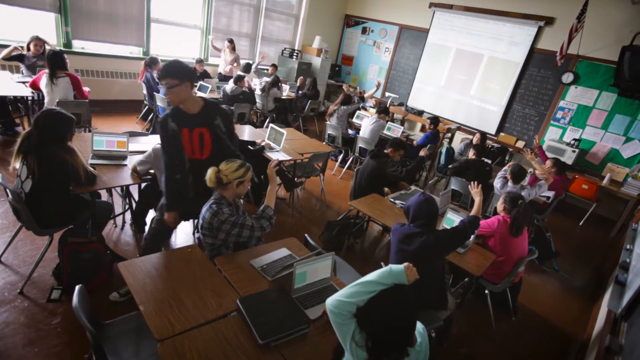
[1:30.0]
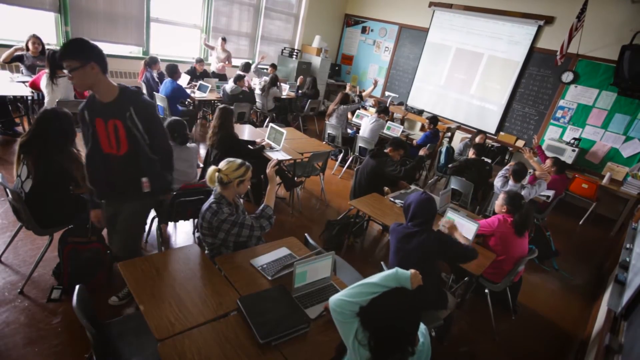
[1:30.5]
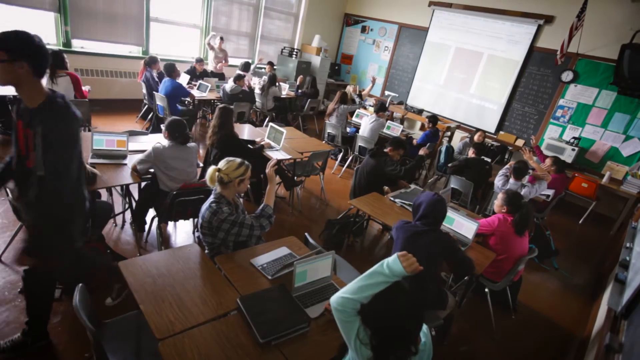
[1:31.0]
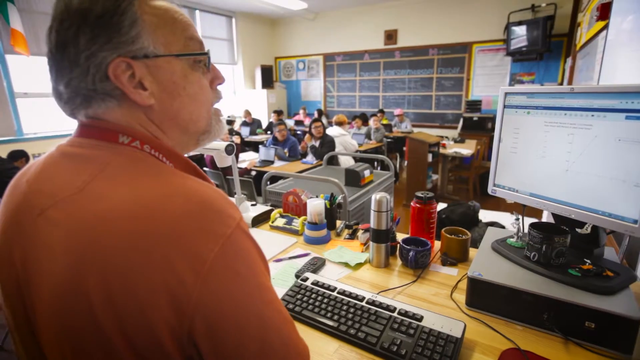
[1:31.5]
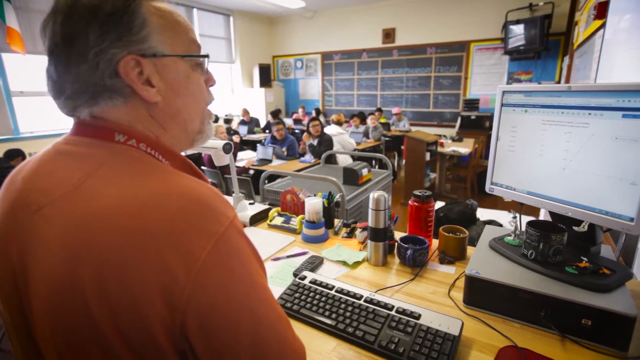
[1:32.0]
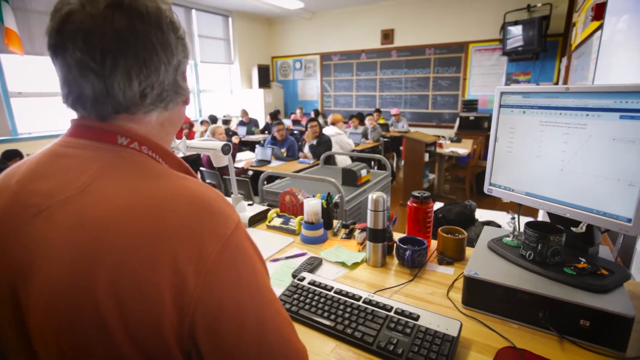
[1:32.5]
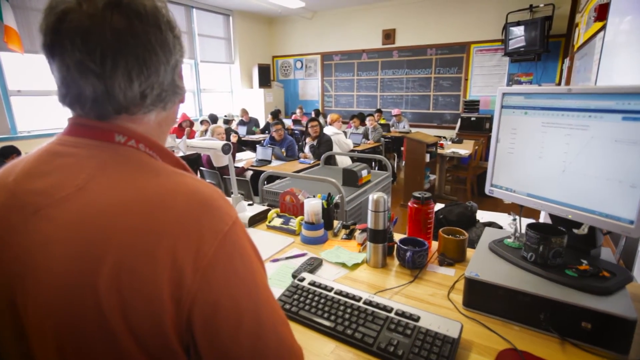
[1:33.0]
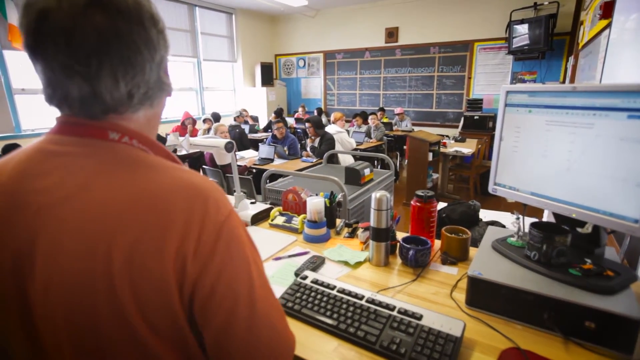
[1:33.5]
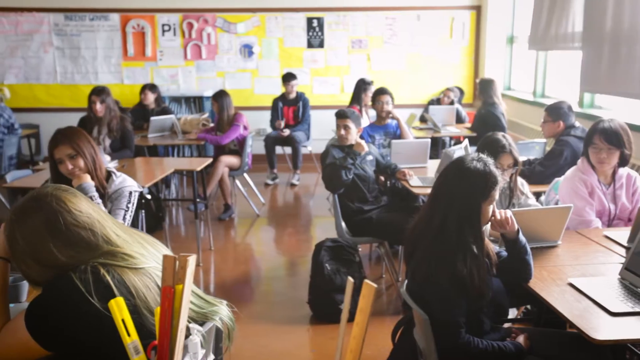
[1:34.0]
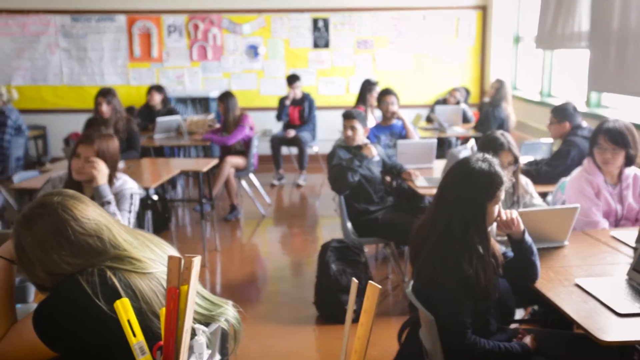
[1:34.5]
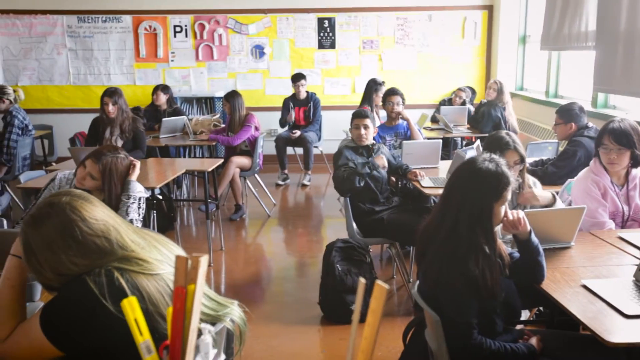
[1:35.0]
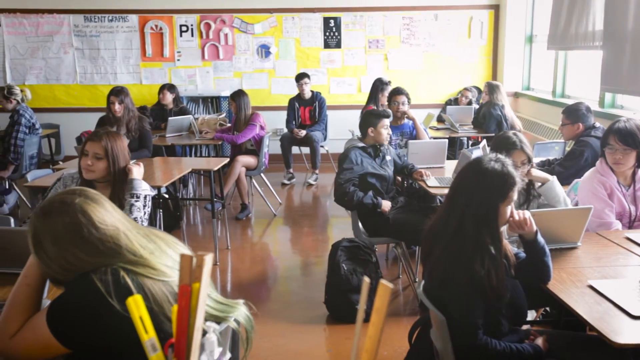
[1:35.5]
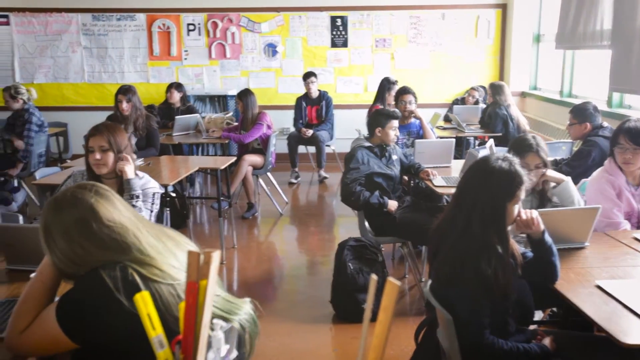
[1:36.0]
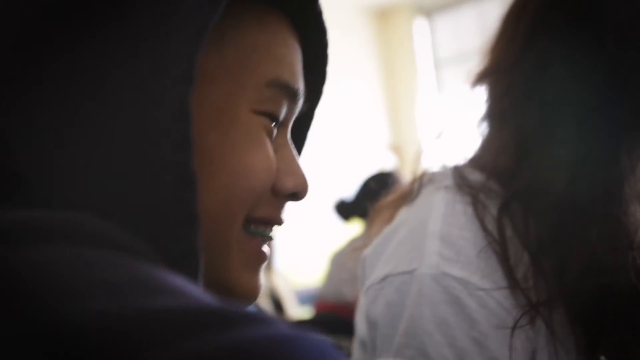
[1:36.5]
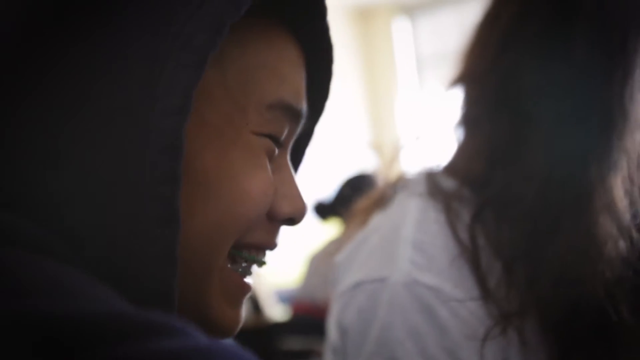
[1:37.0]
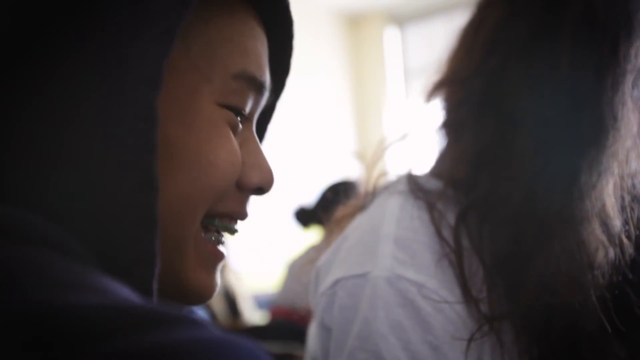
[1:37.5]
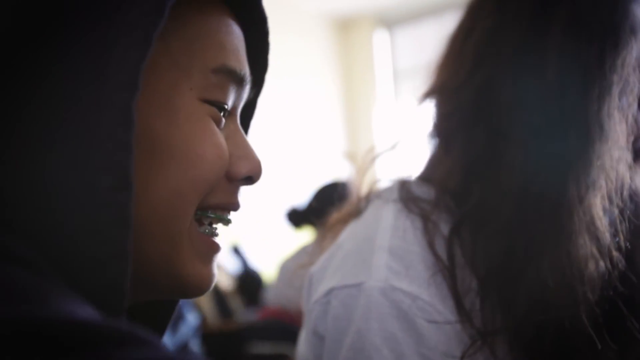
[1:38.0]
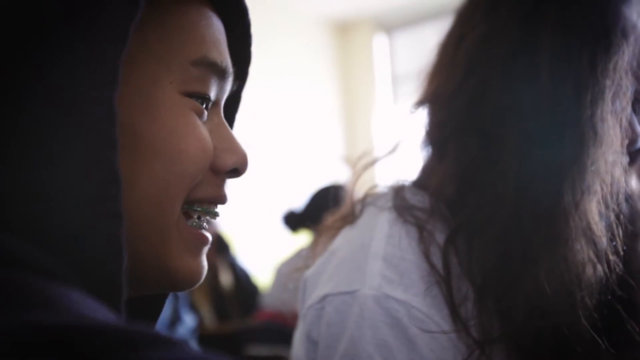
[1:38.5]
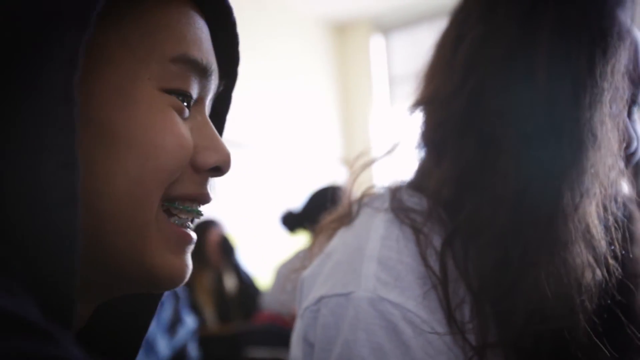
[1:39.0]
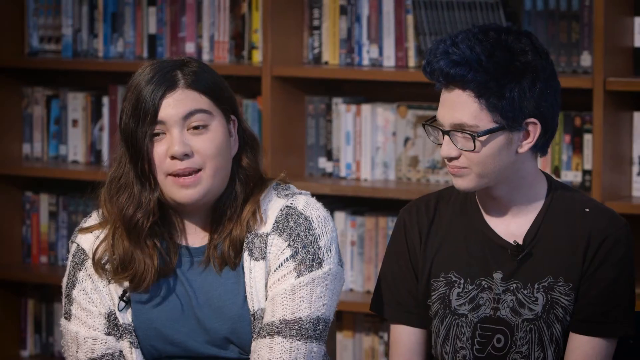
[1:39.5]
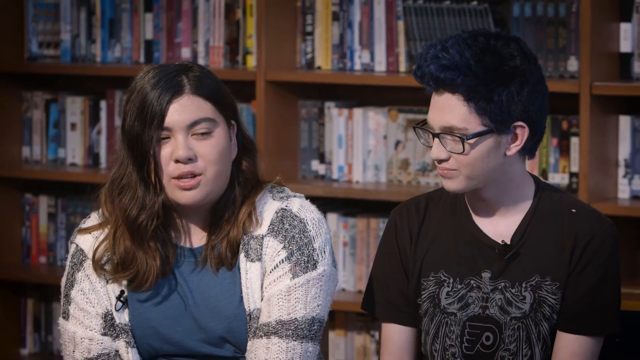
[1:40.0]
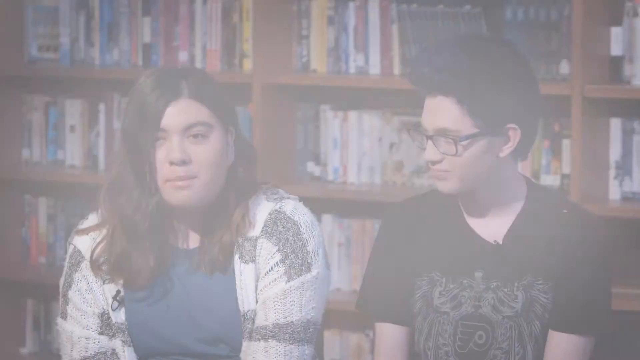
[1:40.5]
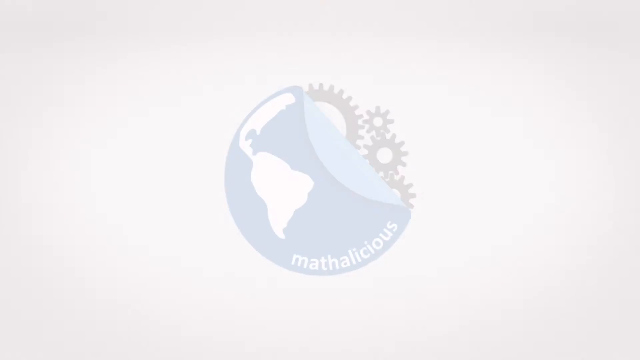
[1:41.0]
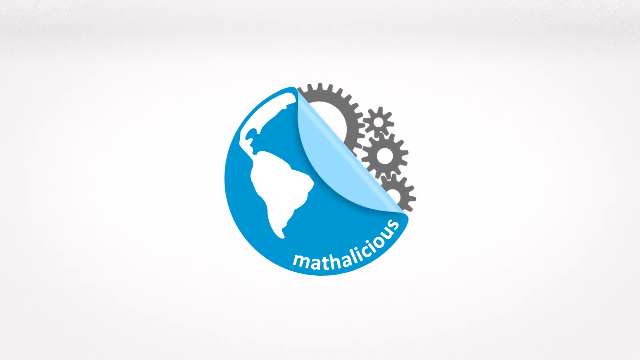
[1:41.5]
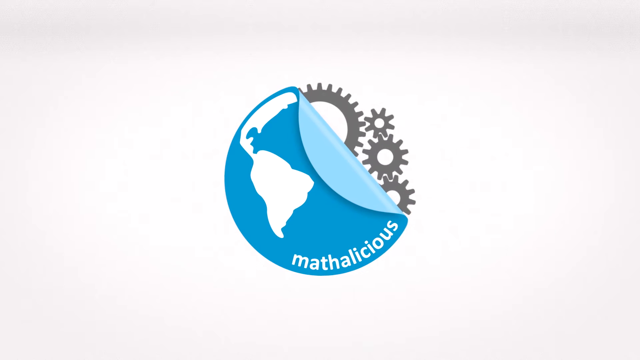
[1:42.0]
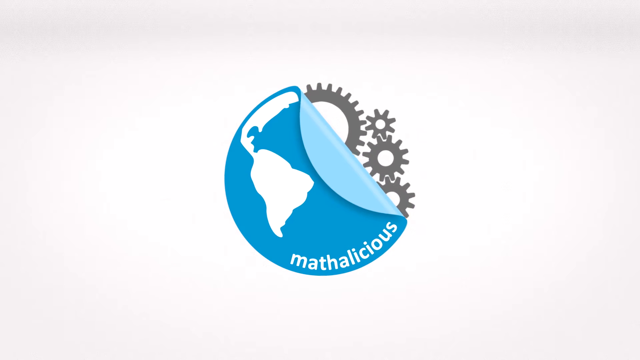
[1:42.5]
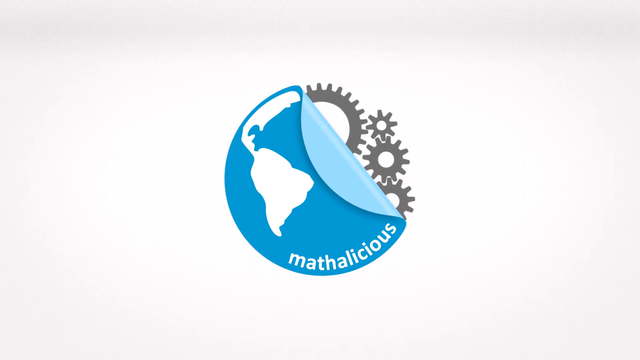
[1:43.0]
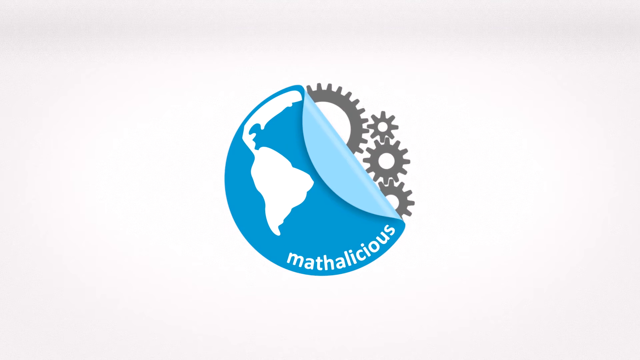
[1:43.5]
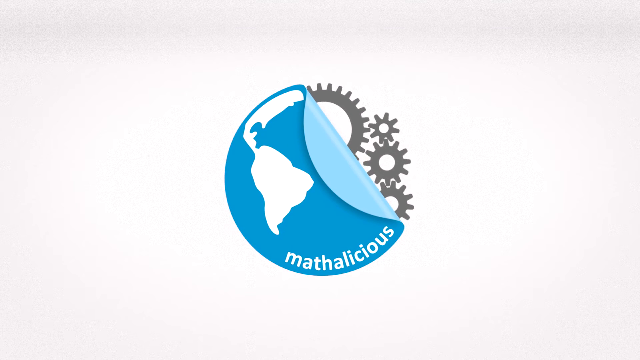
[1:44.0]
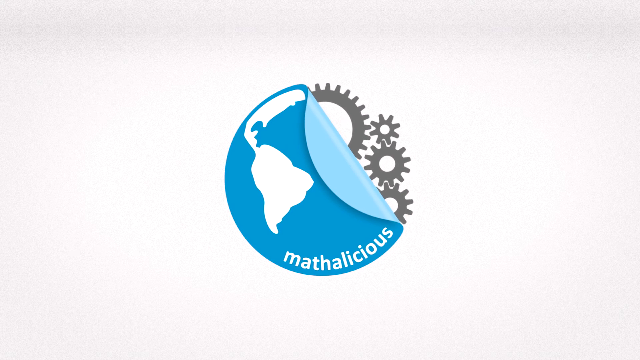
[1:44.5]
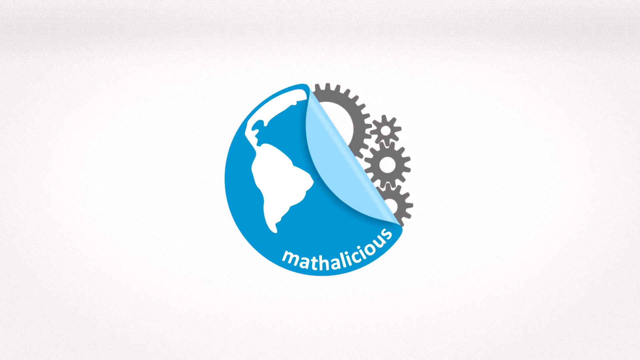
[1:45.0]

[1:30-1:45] The classroom is shown again, and the student who was in the middle is now at the back of the classroom. The teacher talks to the class while looking at his computer; he seems to be in his 50s and has glasses, white hair and a beard. The view pans to another angle of the classroom, where one student is visibly not at a table and sits on a chair by himself. The students seem to be interacting with each other. A student wearing a hoodie with the hood up and braces is shown laughing. The video pans back to the two young teenagers being interviewed, showing the young girl with long hair. The final shot shows the Mathalicious logo: half of the globe of the Earth on one side and turning gears on the other half.